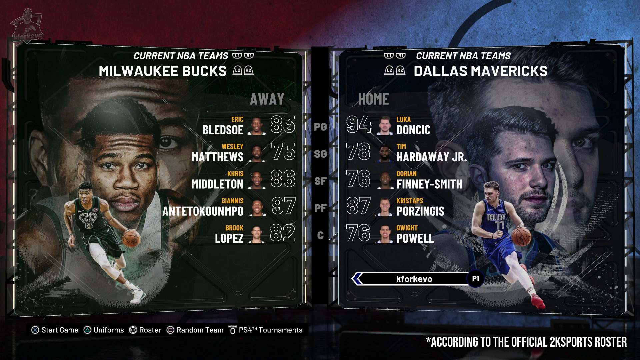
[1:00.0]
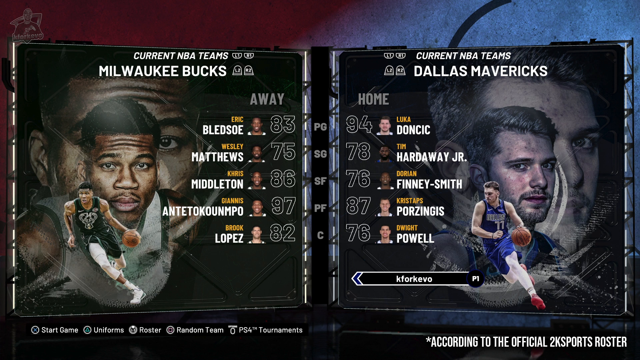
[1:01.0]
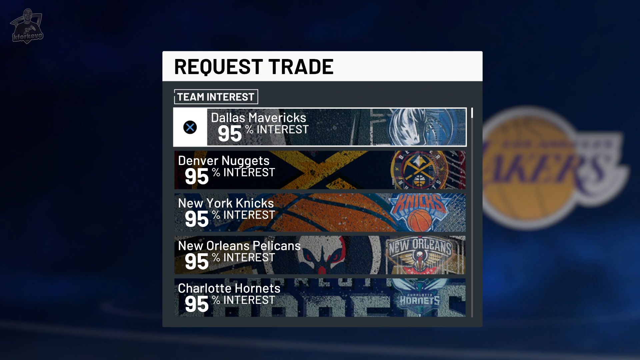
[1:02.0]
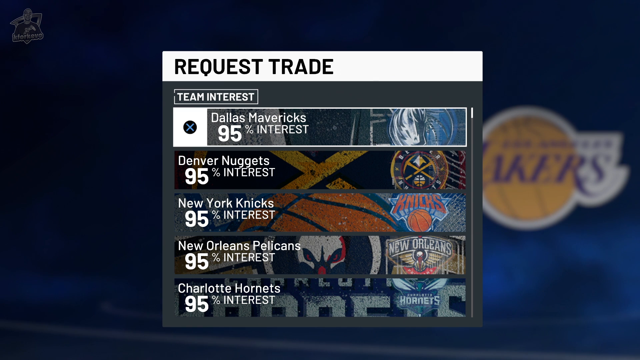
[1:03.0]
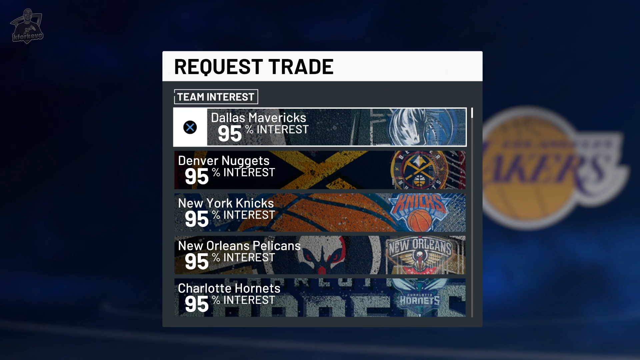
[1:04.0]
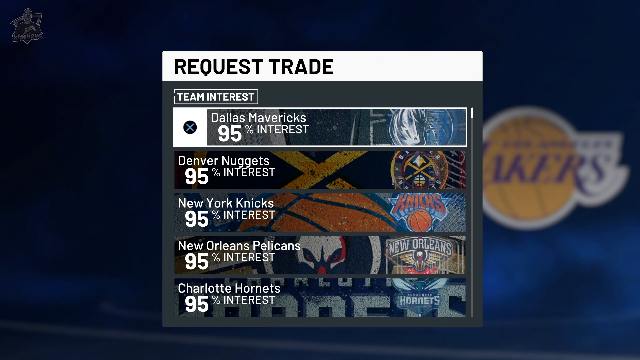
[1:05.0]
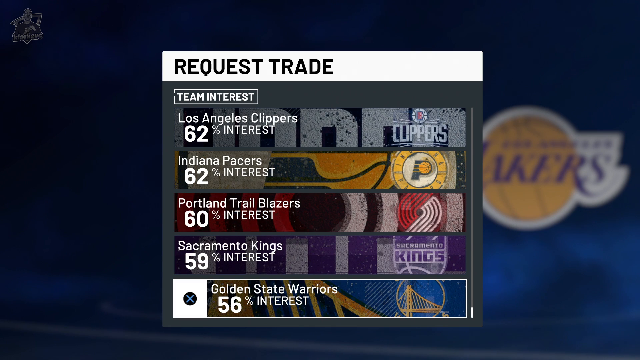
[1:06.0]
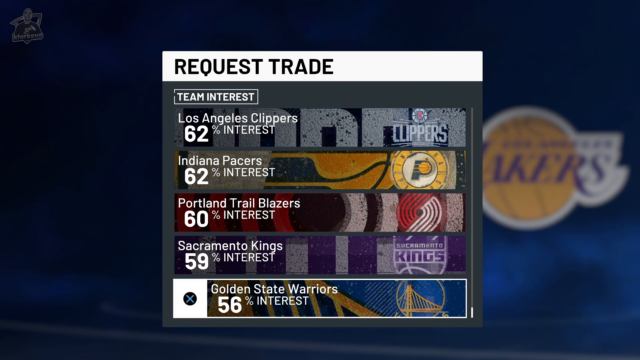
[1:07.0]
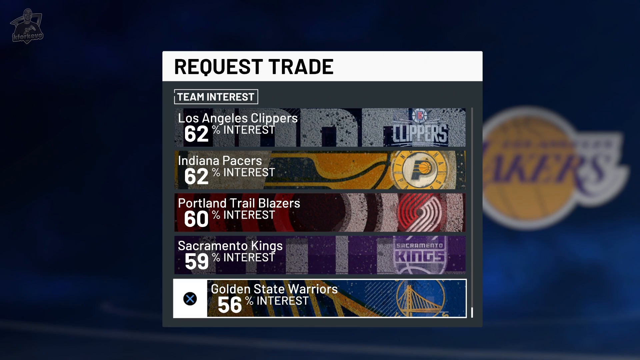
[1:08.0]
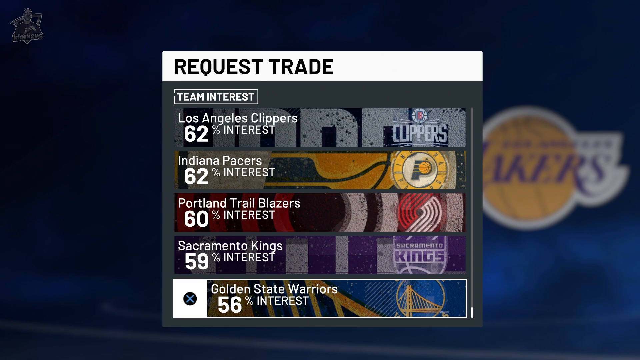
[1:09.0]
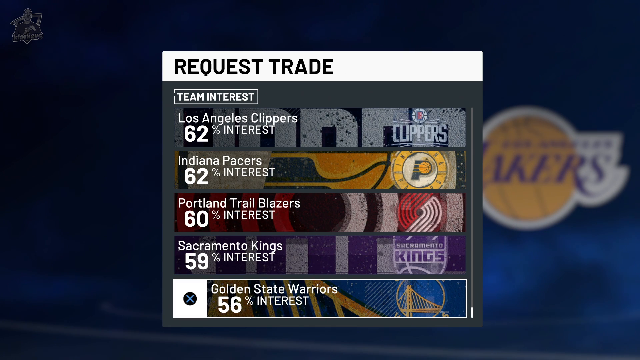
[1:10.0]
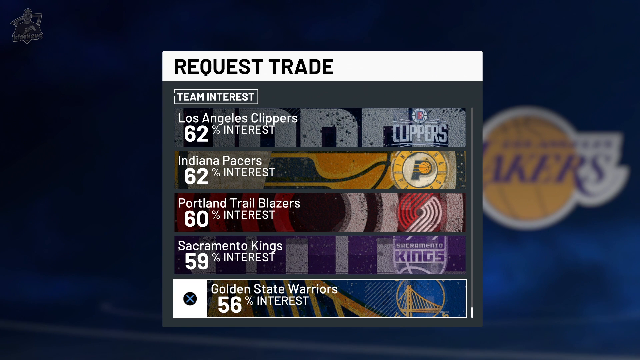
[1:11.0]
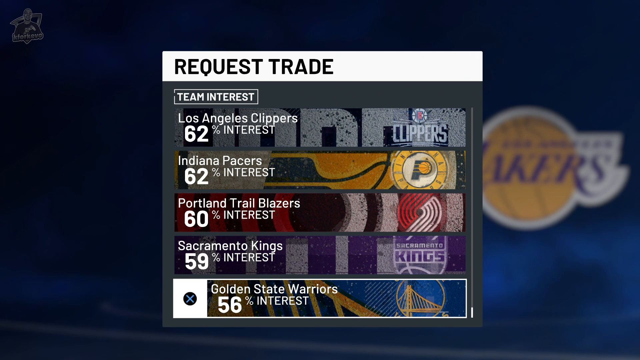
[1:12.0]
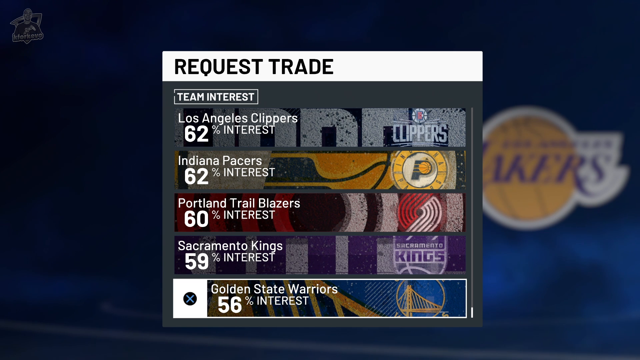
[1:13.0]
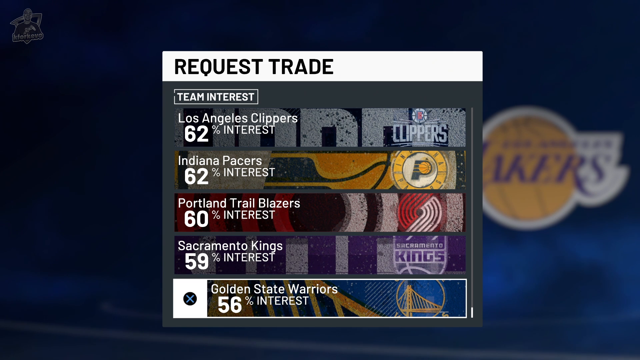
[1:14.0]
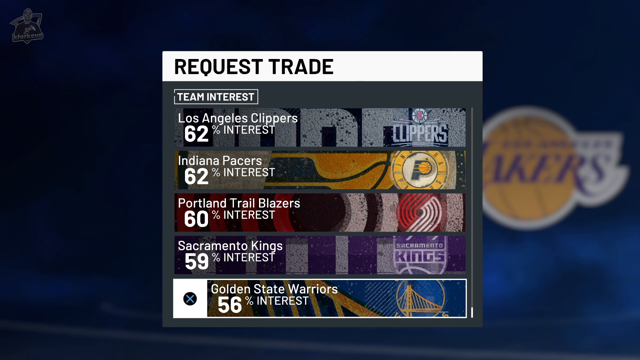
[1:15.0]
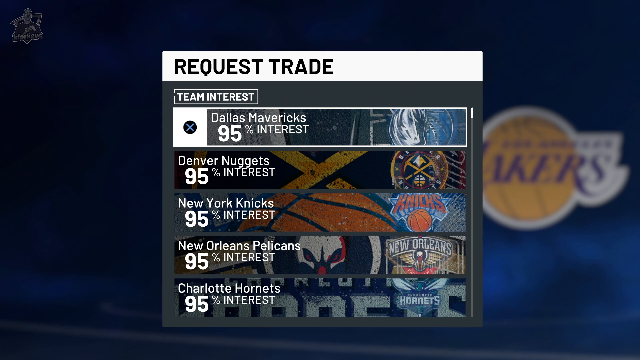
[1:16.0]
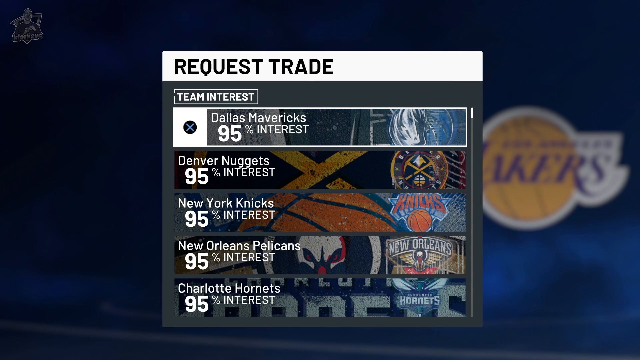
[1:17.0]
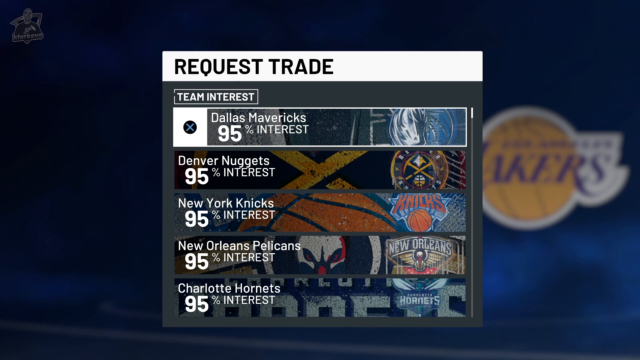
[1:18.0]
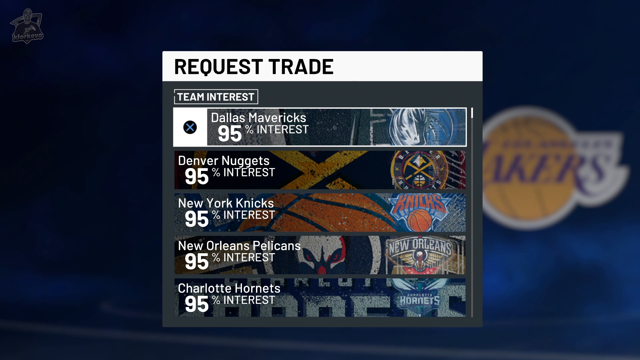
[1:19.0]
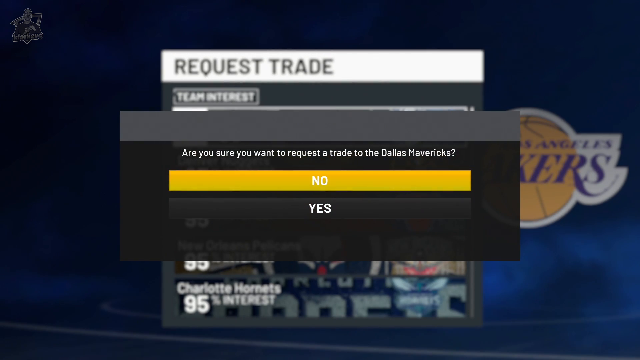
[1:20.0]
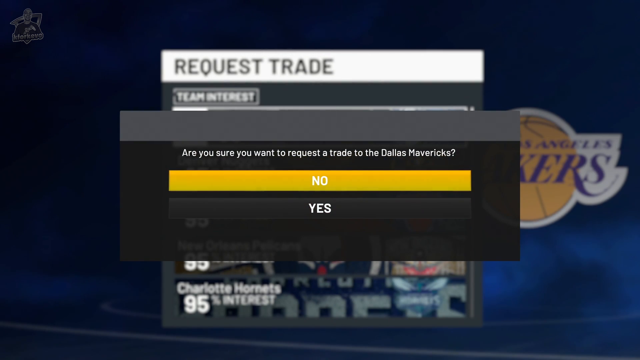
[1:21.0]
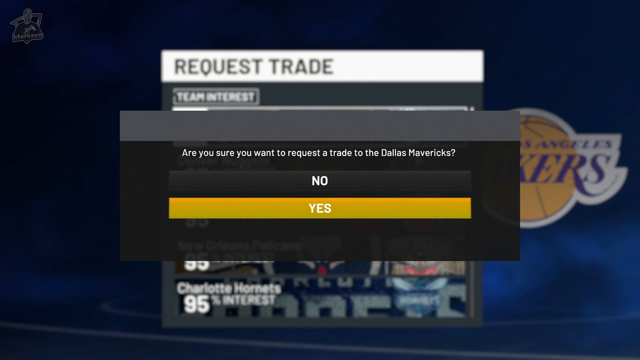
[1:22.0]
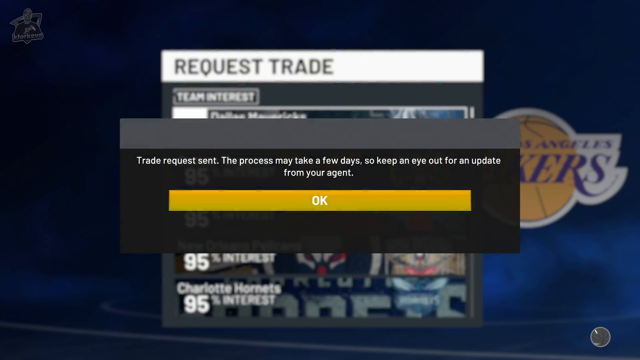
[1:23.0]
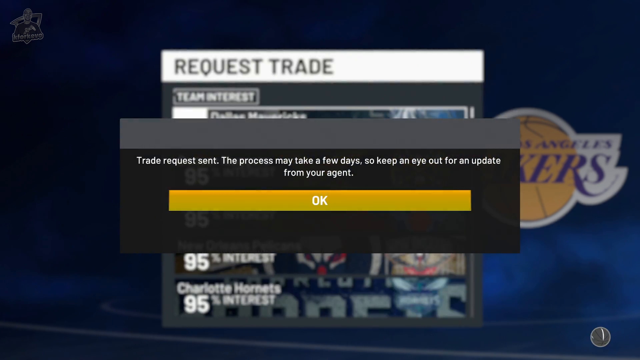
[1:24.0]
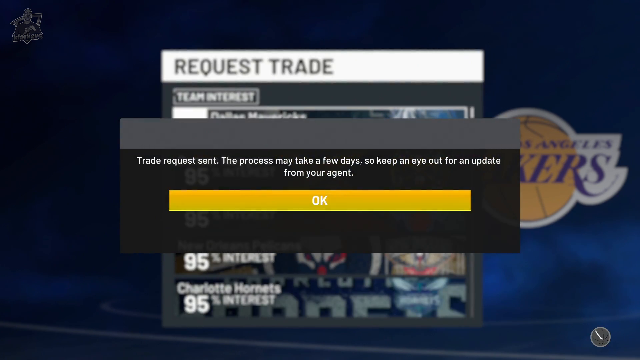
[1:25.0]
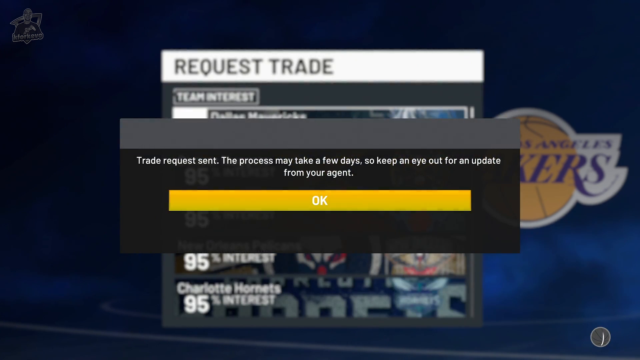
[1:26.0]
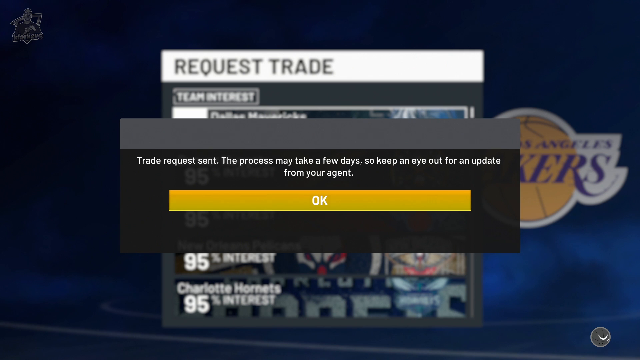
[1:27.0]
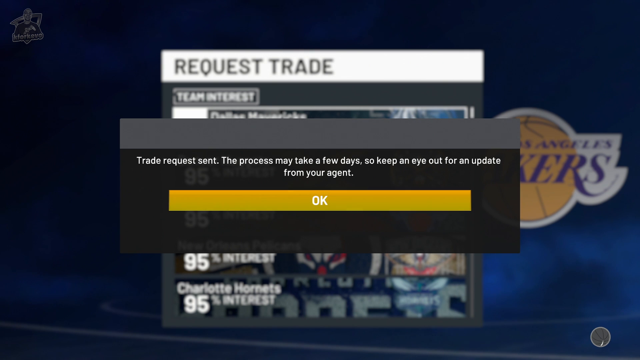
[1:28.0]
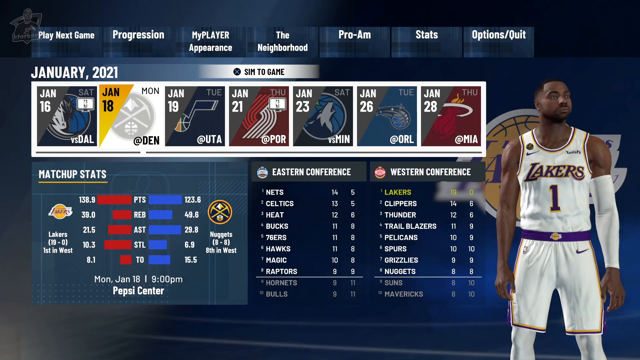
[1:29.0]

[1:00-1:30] The video shows what look like menus in an NBA game, with the player apparently browsing through them. At first a menu reads "request trade" at the top, with a list of teams and percentages below it. The Dallas Mavericks, at 95%, appear to be selected, but the list then goes all the way to the bottom, as the scroll bar shows, and the bottom choice appears to be selected: Golden State Warriors at 56% interest. Above it are four more teams: Sacramento Kings at 59%, Portland Trailblazers at 60%, Indiana Pacers at 62% and, at the top, Los Angeles Clippers at 62%. The list then apparently scrolls back up to the top five, as the scroll bar shows. At the top is the Dallas Mavericks at 95%, currently selected with a black X next to it, followed by the Denver Nuggets, New York Knicks, New Orleans Pelicans and Charlotte Hornets, all at 95%. The Dallas Mavericks are apparently selected, as a gray pop-up appears with white text reading "are you sure you want to request the trade to the Dallas Mavericks" and two buttons, no and yes. No is currently selected in yellow; the selection moves down to yes, which turns yellow, and it is selected. The pop-up then reads "trade request sent the process may take a few days so keep an eye out for an update from your agent" with a yellow "okay" button. The okay button is apparently selected, and the view returns to the main menu, showing the stats, the upcoming games on a bar in the middle of the screen, and the player avatar on the right side: a black man wearing a white Lakers uniform with the number one. The bottom shows the match stats and the Eastern Conference and Western Conference.